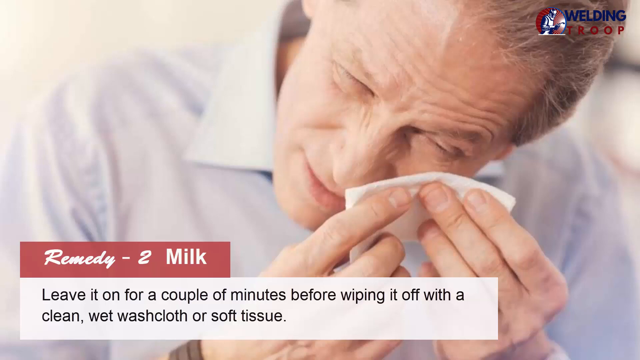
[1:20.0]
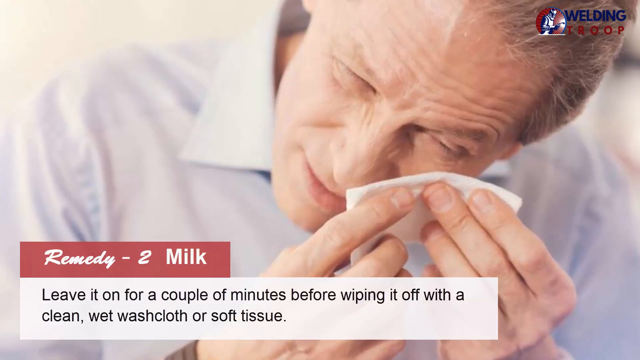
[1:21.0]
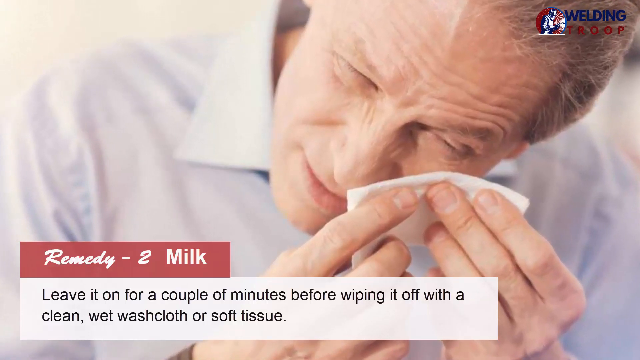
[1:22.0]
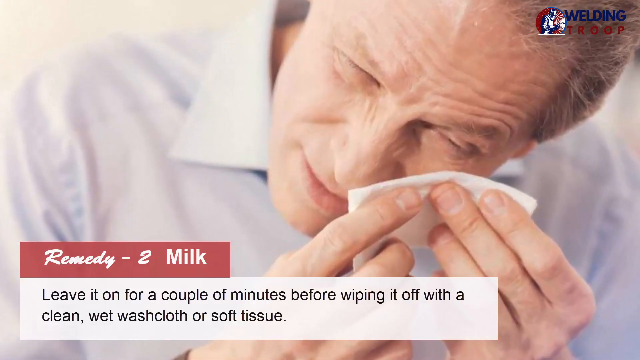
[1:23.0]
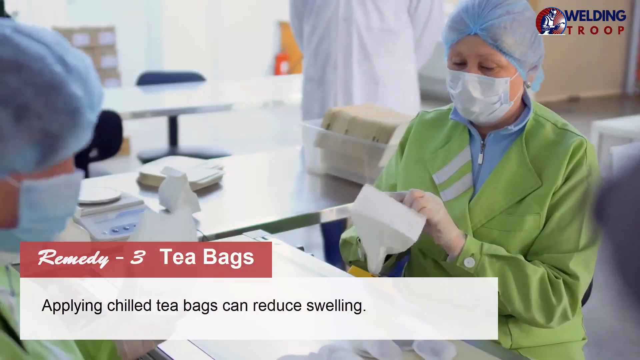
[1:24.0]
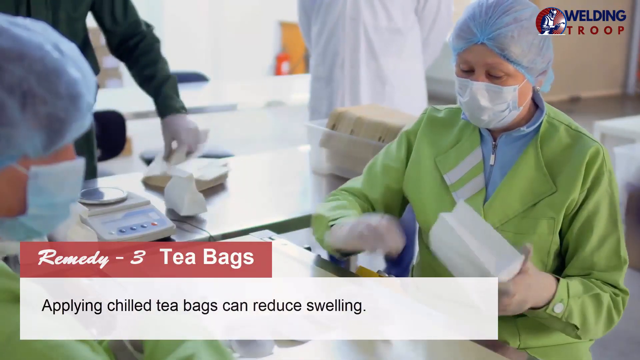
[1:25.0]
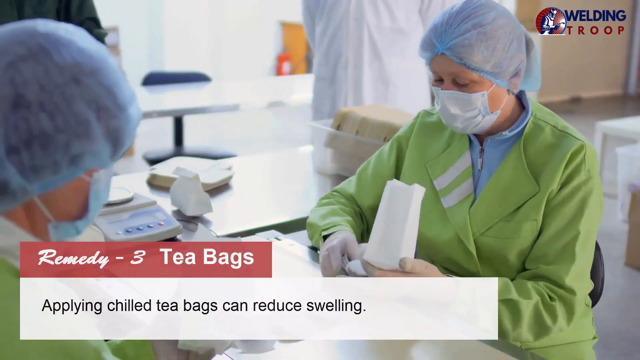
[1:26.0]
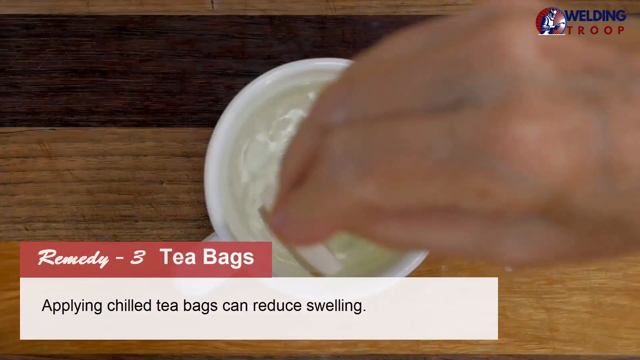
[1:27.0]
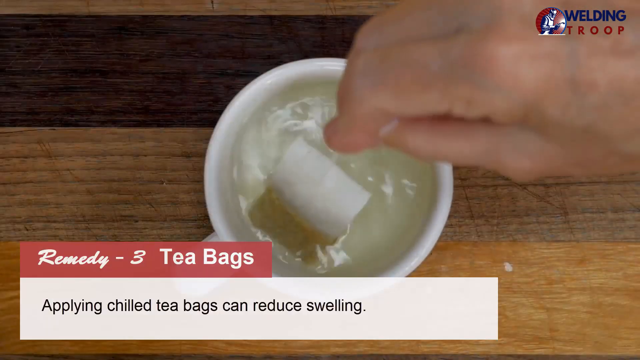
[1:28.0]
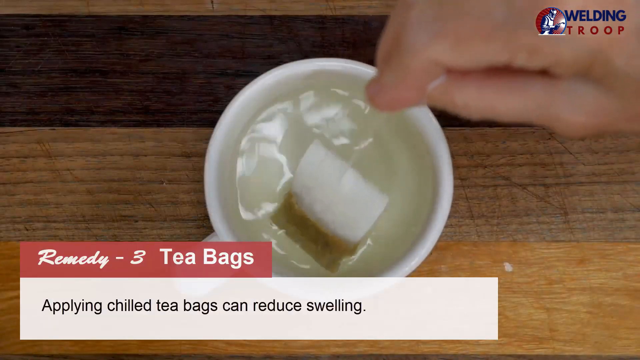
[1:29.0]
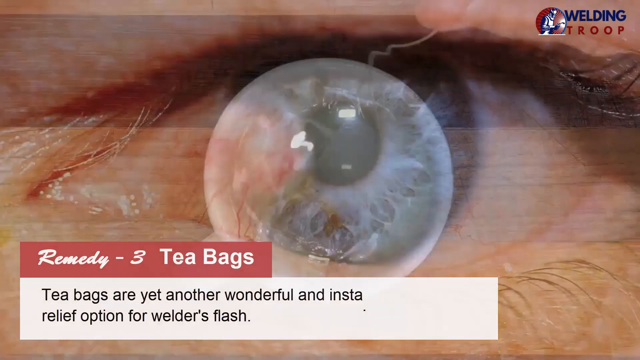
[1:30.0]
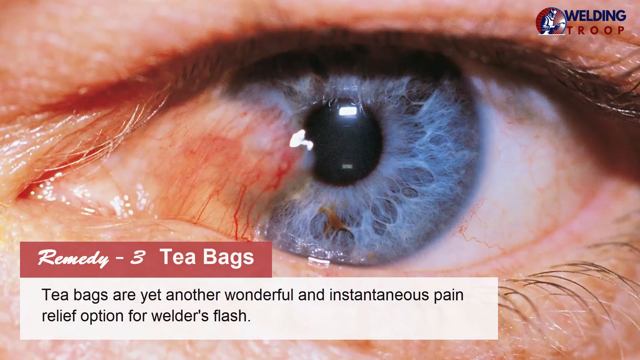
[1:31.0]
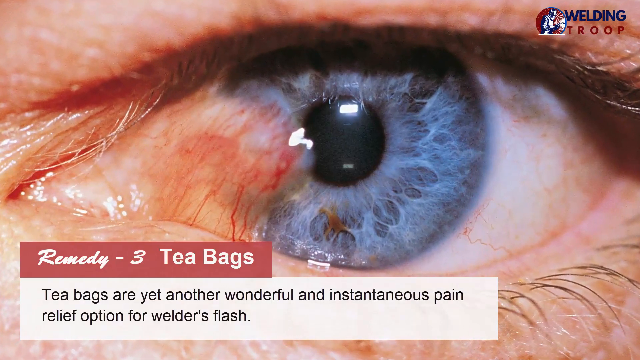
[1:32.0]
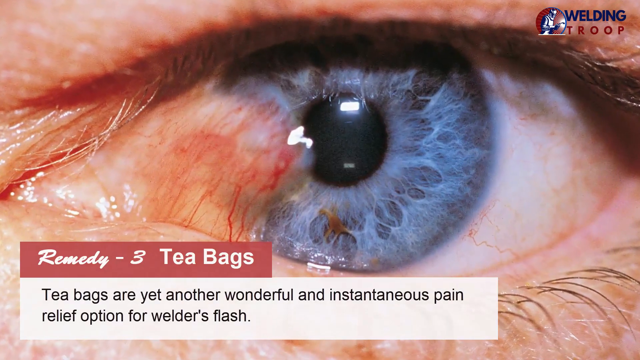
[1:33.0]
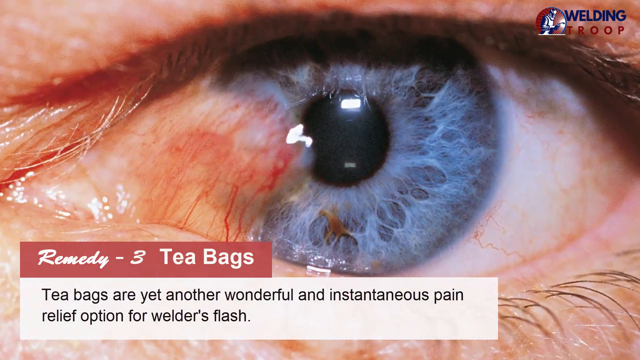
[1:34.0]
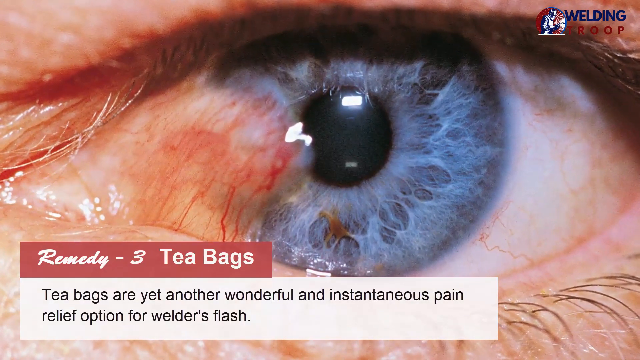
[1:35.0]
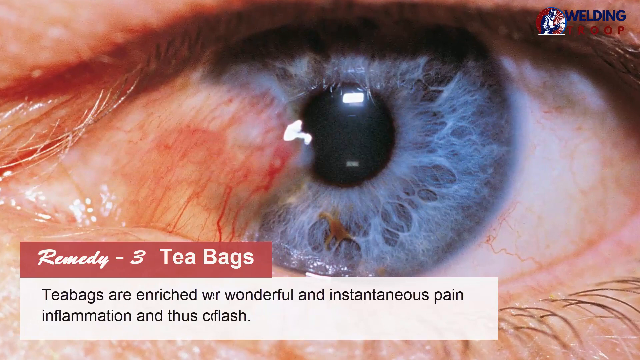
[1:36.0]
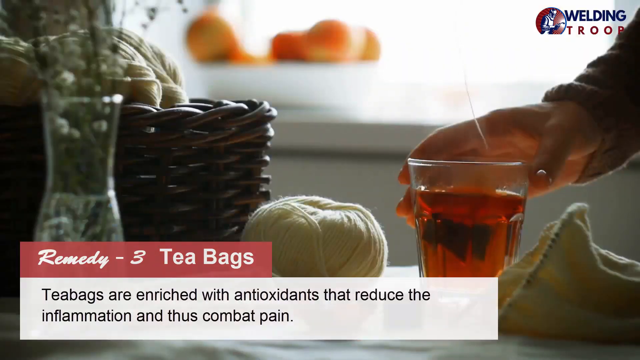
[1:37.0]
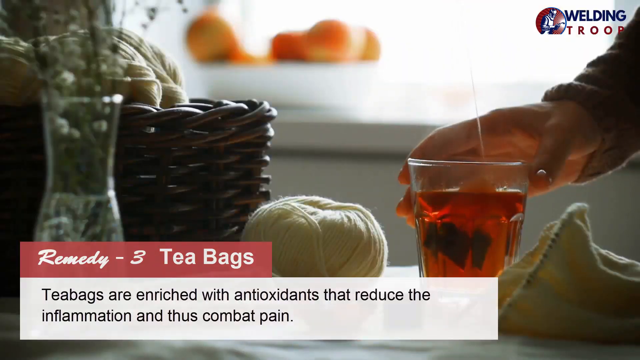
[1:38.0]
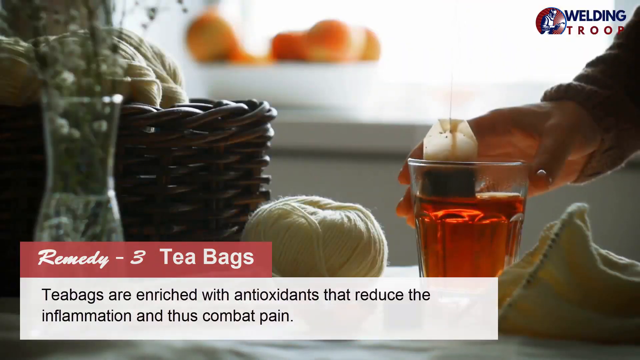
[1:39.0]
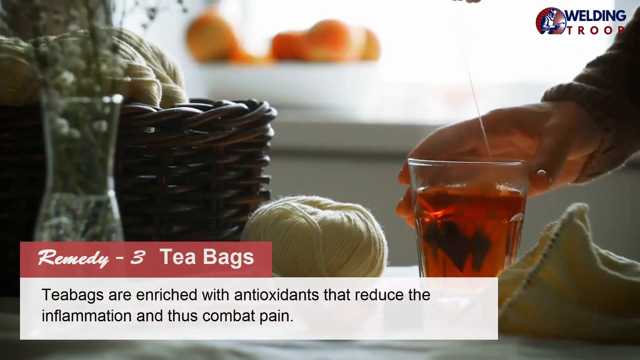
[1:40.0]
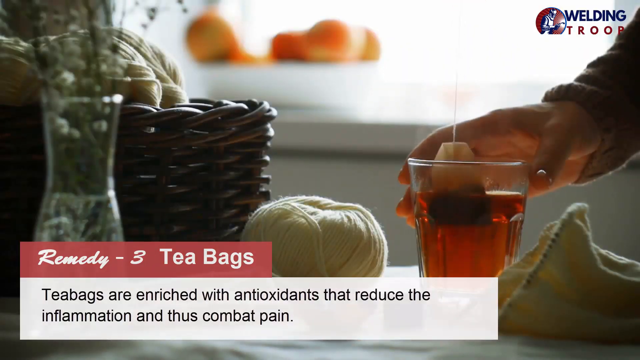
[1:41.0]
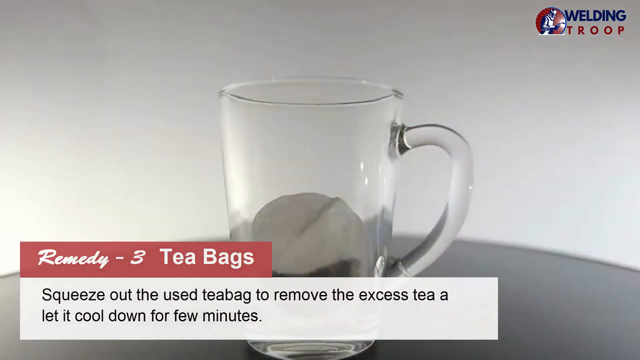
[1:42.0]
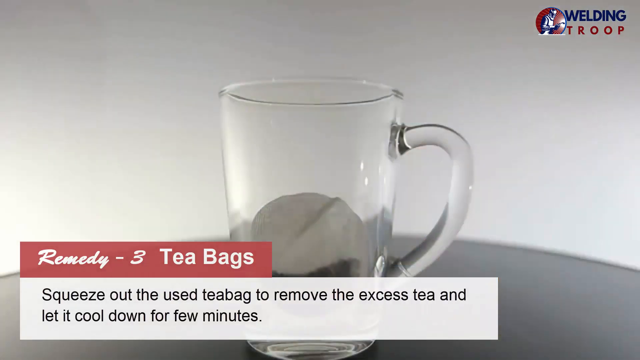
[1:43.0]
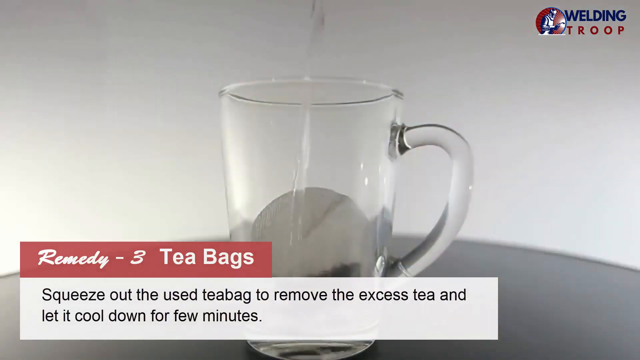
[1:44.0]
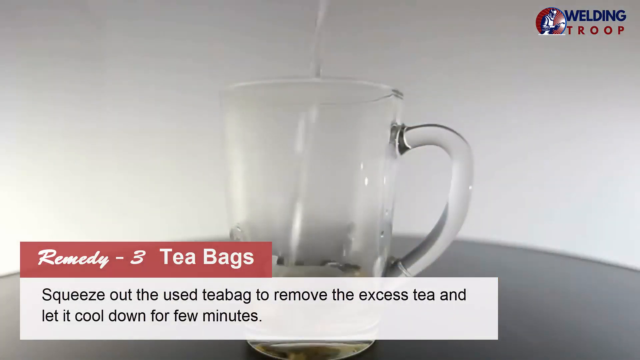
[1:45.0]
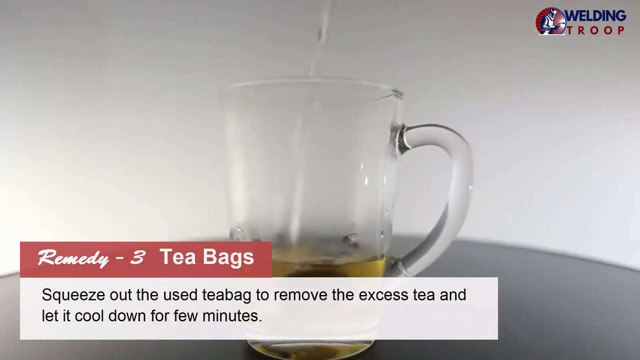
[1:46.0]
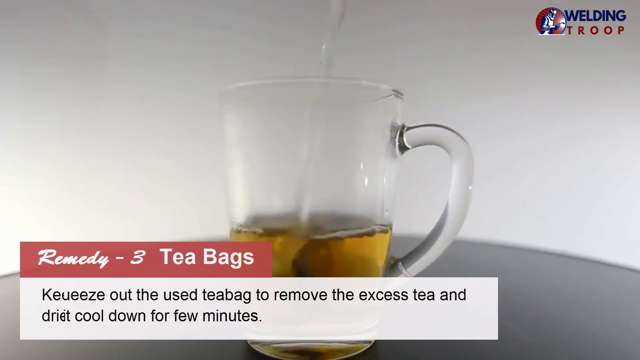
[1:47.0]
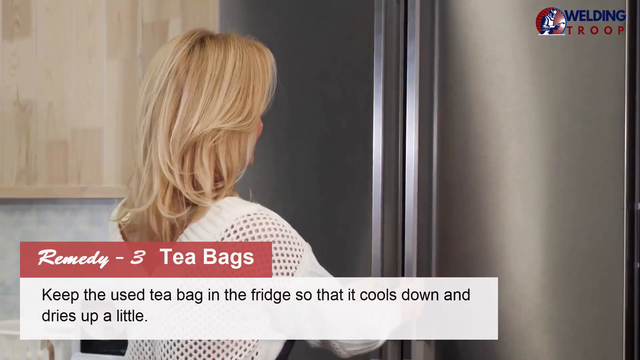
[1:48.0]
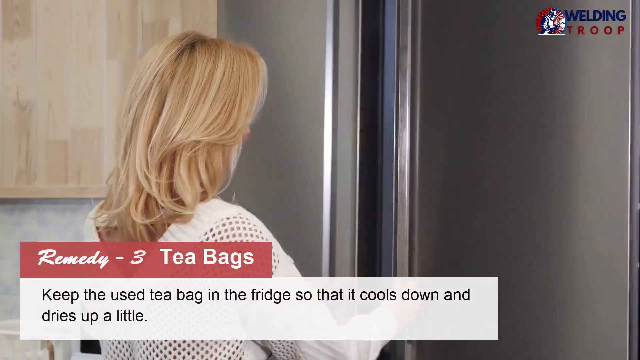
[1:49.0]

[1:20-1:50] A man uses a washcloth to wipe his face, with the text "leave it on for a couple of minutes before wiping it out with a clean wet washcloth or soft tissue." A woman appears to be walking in some type of medical office, with the text "remedy three teabags" and "plain chilled teabags can reduce swelling." A person dips a teabag into a mug of hot water while the text "plain chilled teabags can reduce swelling" is shown. A close-up of a person's eye, which looks sore, carries the text "teabags are yet another wonderful and instantaneous pain relief option for welder's flash." A glass of tea appears with "tea bags are enriched with antioxidants that reduce the inflammation and thus combat pain," followed by a mug with a teabag and the text "squeeze out the used teabag to remove the excess tea and let it cool down for a few minutes."